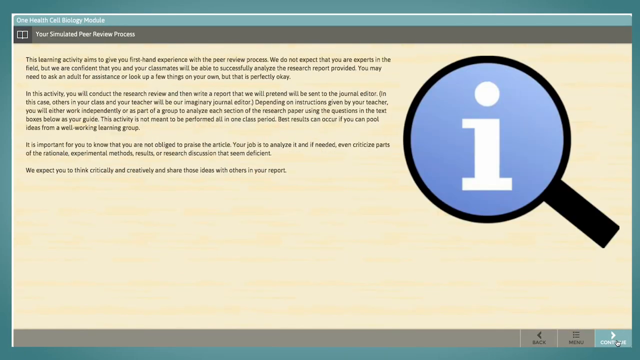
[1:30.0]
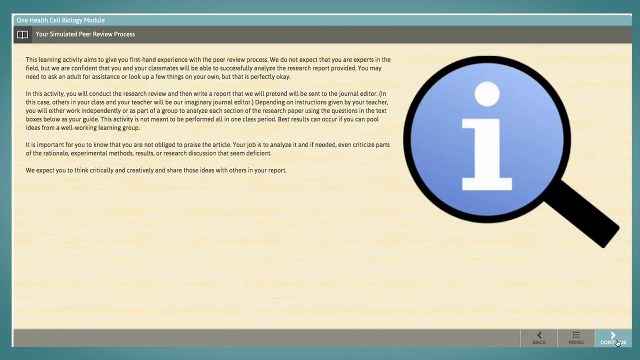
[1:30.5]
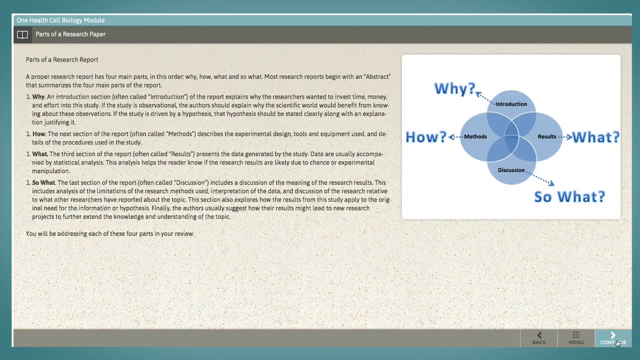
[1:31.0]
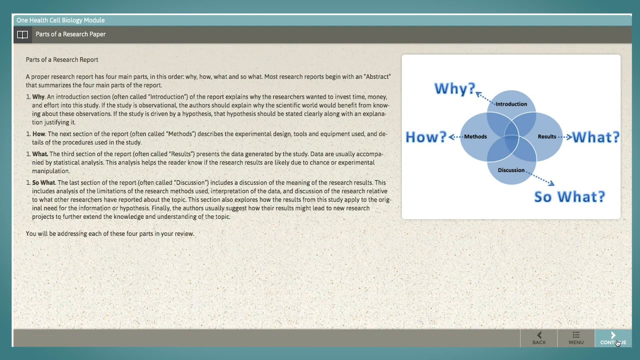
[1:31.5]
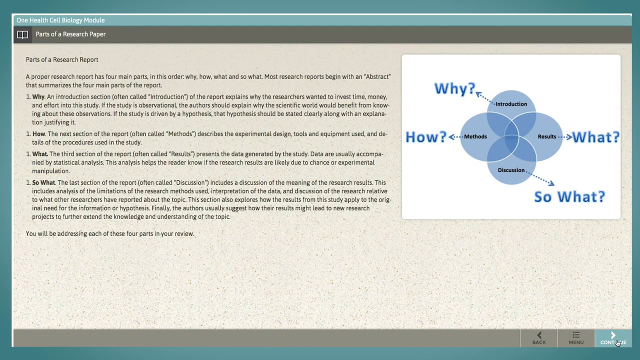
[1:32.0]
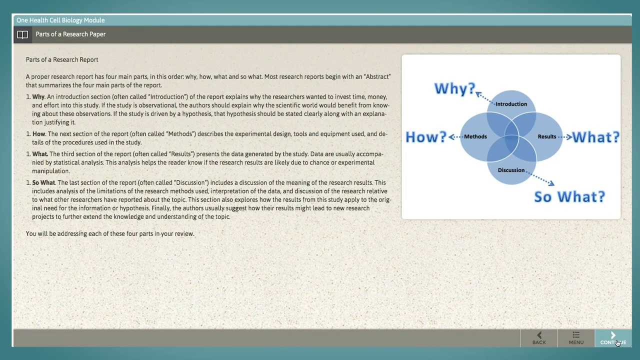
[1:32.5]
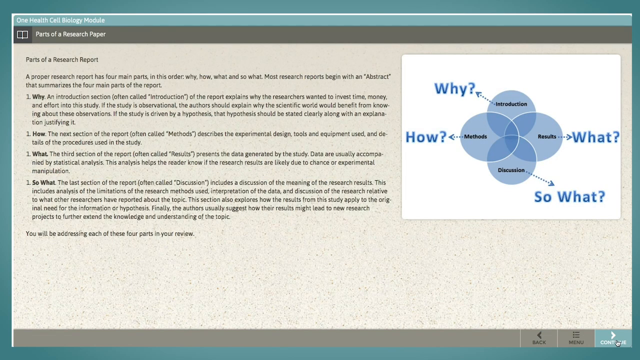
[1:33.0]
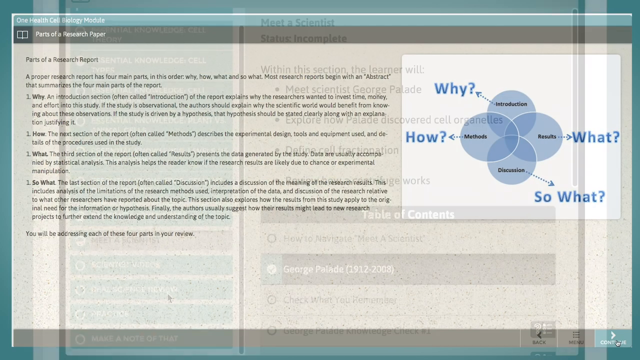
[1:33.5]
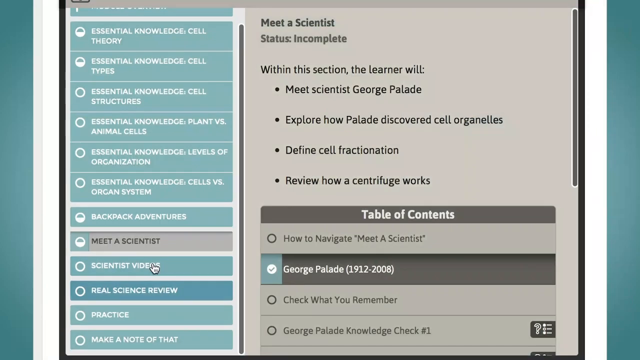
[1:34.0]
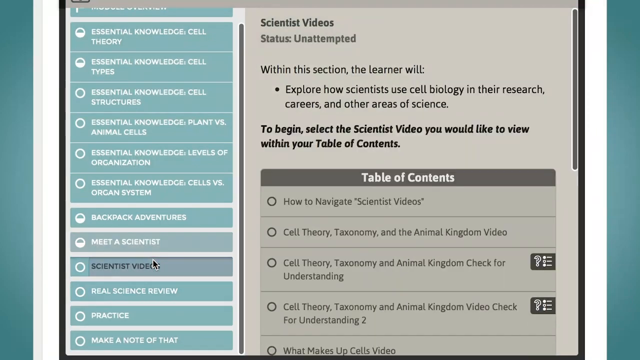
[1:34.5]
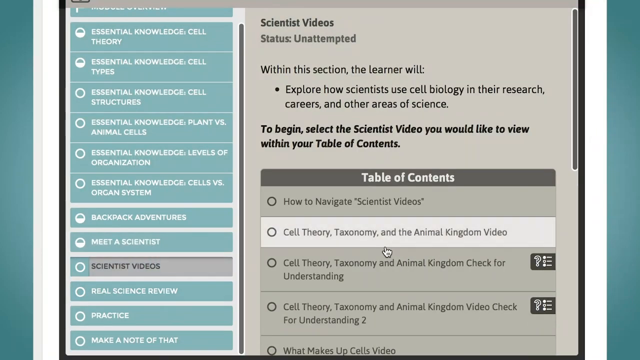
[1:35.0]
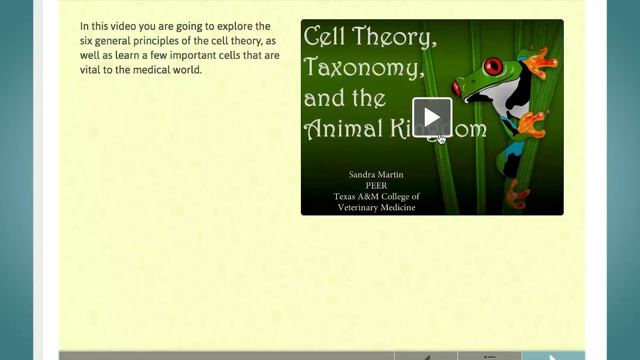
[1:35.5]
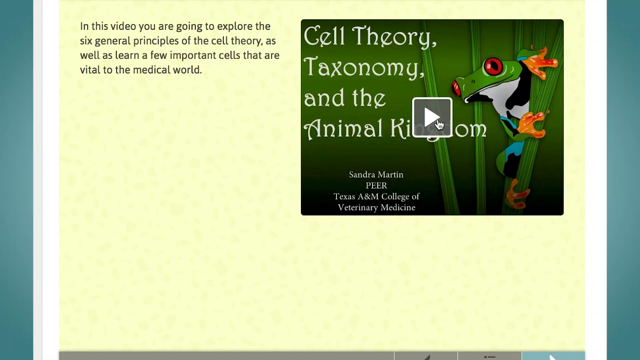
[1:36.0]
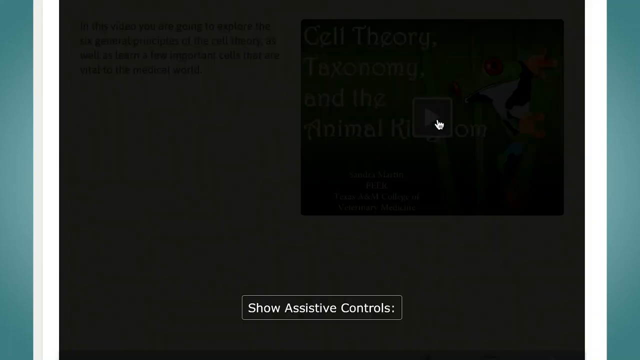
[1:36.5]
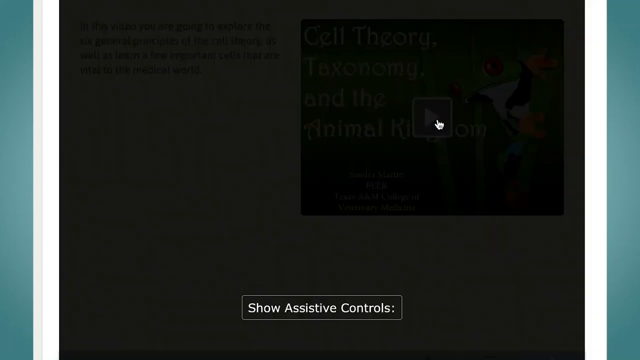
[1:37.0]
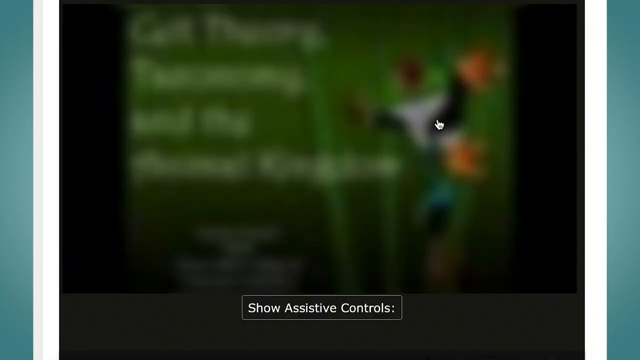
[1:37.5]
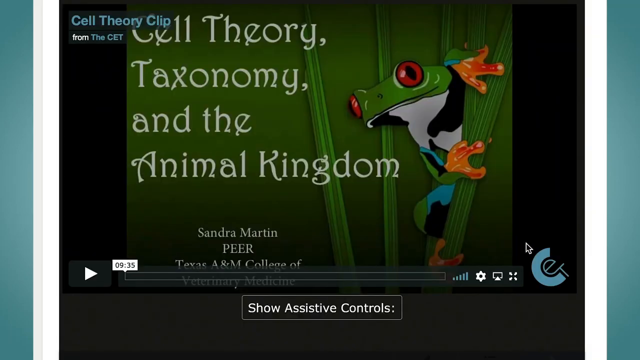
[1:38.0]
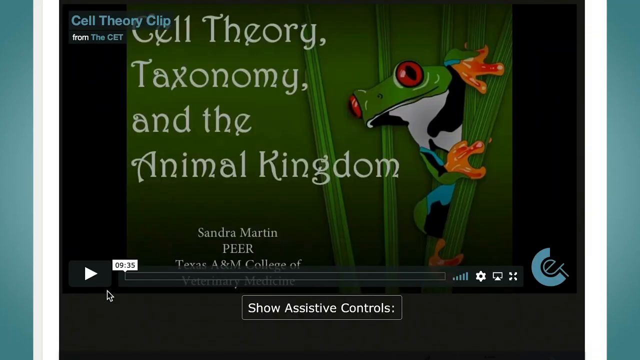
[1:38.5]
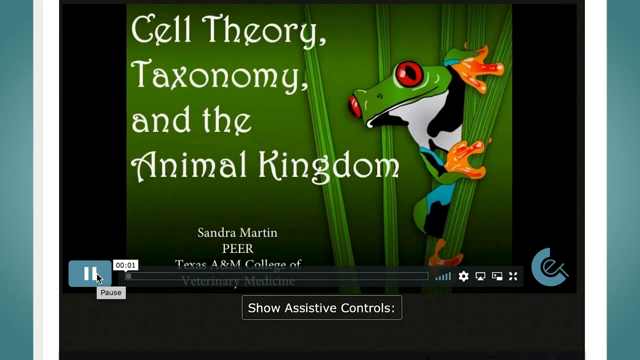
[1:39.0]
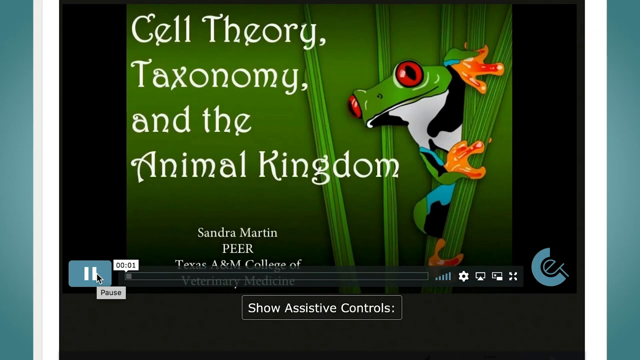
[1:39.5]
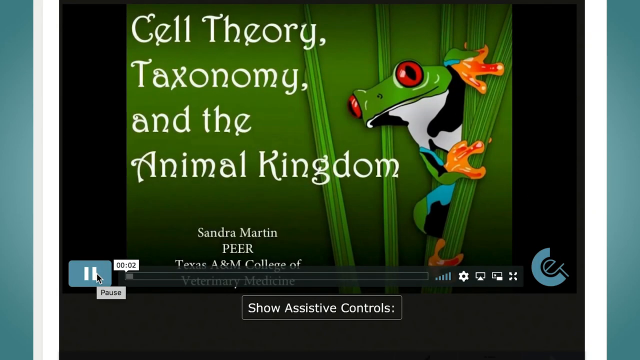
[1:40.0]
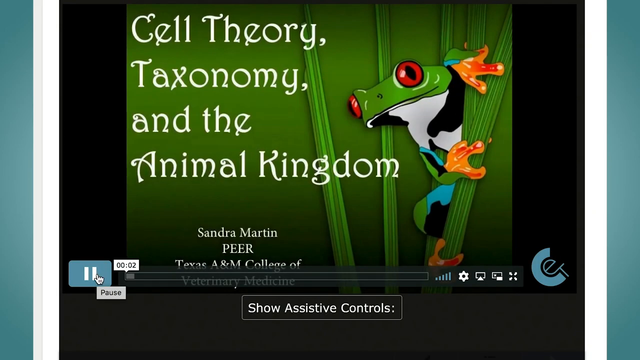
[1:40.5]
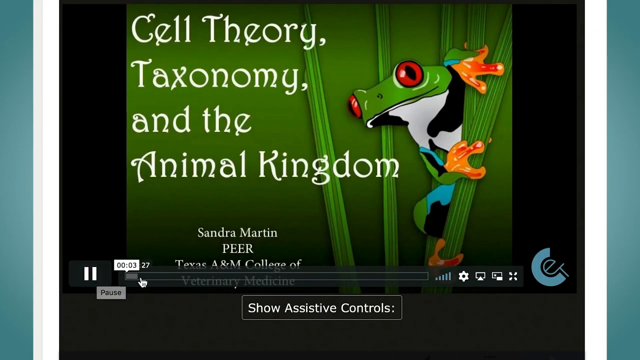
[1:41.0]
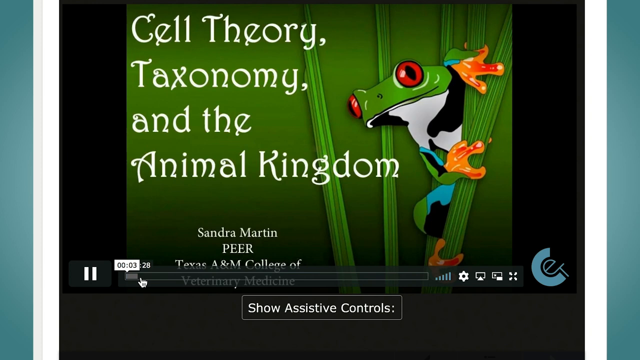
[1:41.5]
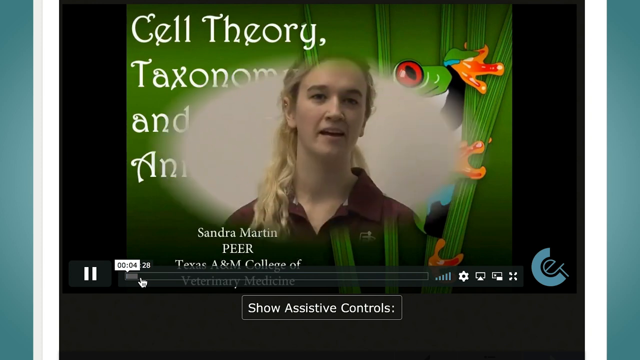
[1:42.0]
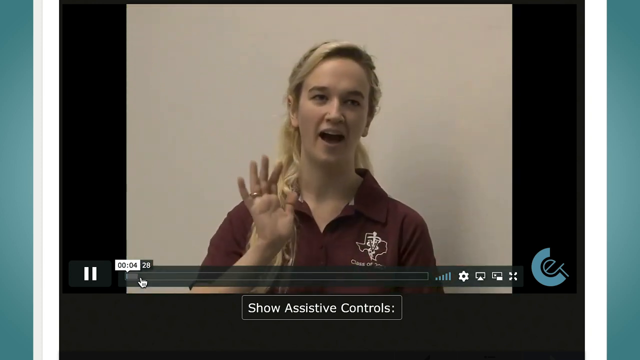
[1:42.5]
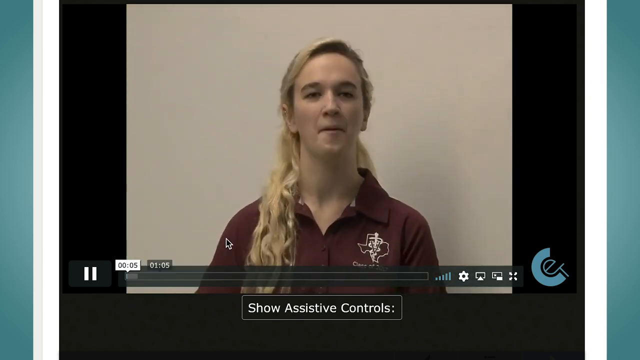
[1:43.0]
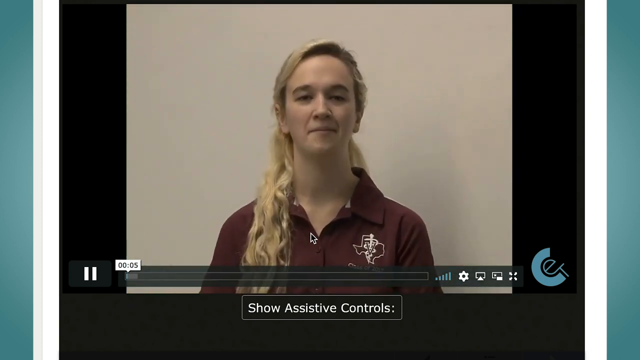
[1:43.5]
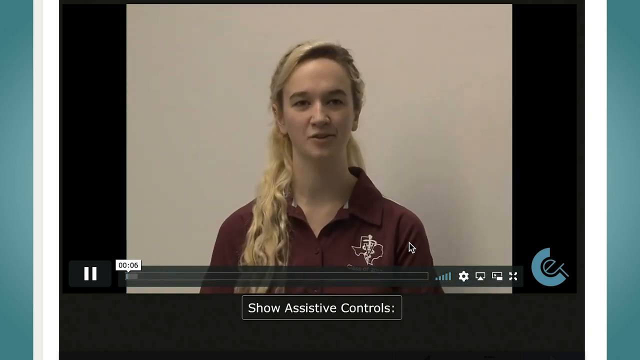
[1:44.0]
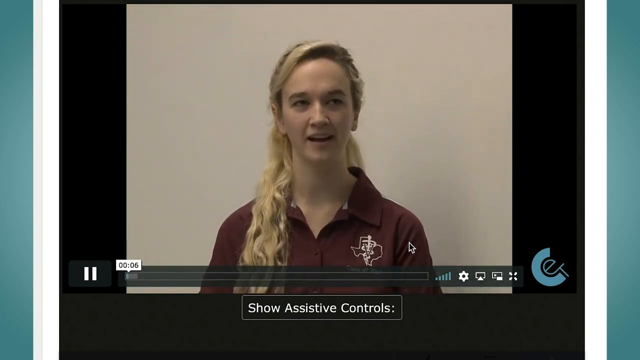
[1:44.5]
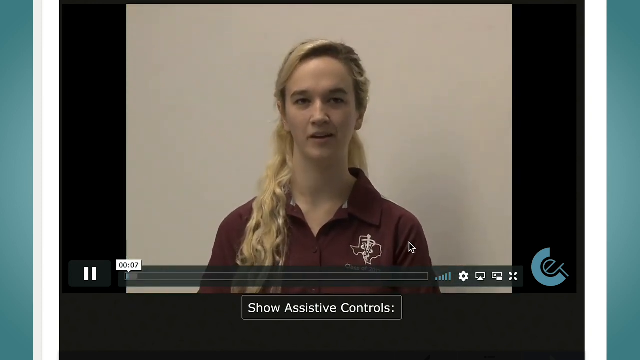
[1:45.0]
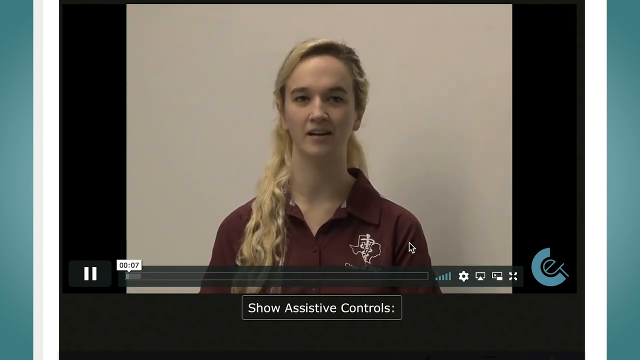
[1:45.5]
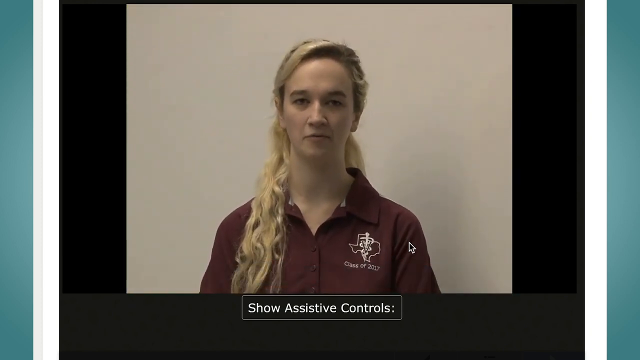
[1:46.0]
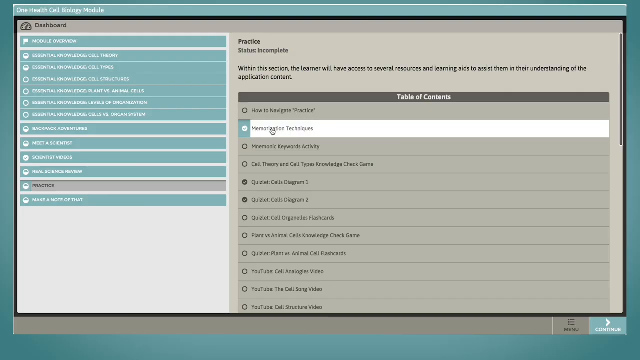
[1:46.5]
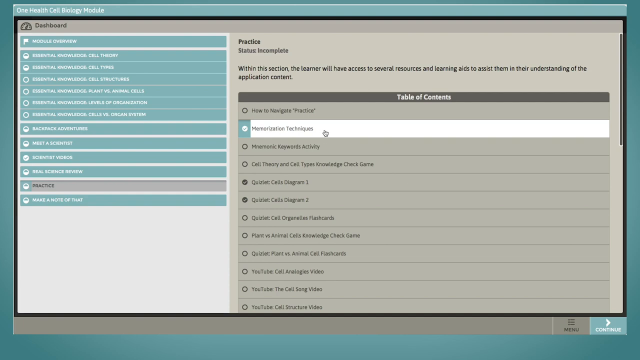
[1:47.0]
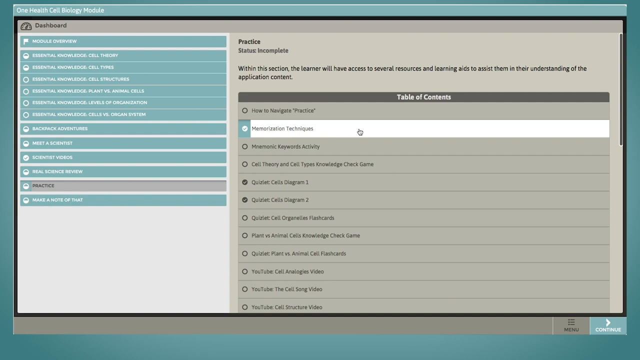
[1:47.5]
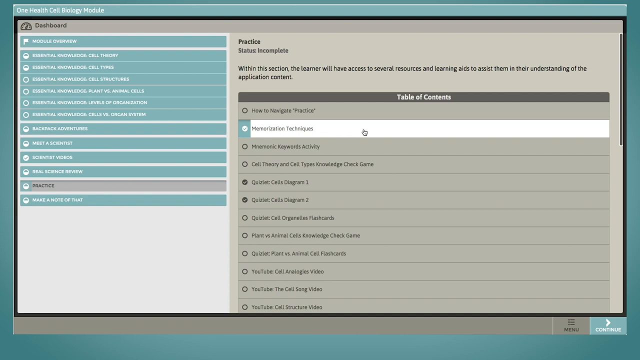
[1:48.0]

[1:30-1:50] A page from the One Health Cell Biology module is labeled "Your Simulated Peer Review Process". On the right is an image of a magnifying glass whose center is colored blue, containing a large white lowercase "i"; on the left is blue text on a yellow background. The page changes to parts of a research paper, with a sort of gray background and black text on the left explaining the parts of a research paper. On the right is an inset square with a white background and blue, containing four bubbles labeled "Introduction", "Results", "Discussion" and "Methods". The view goes back to the module, which is scrolled through, and another page is chosen: a video called "Cell Theory, Taxonomy, and the Animal Kingdom", whose image has a tree frog on it. Text on the left says "in this video, you are going to explore the six general principles of the cell theory, as well as learn a few important cells that are vital to the medical world." The video starts, showing a blonde-haired woman speaking in front of a wall. Then the view returns to the module.